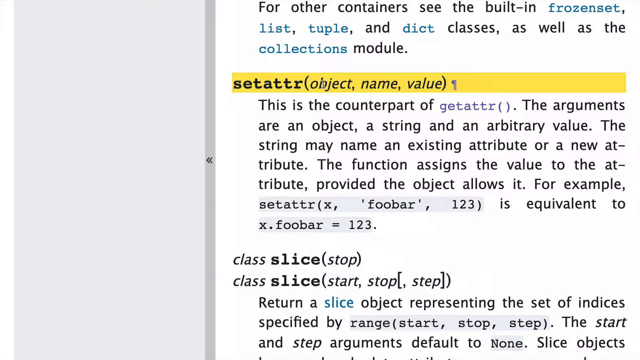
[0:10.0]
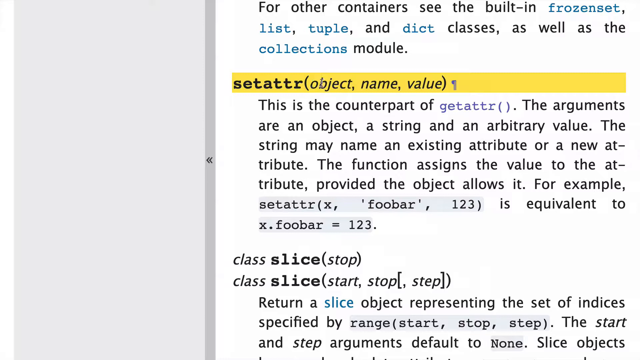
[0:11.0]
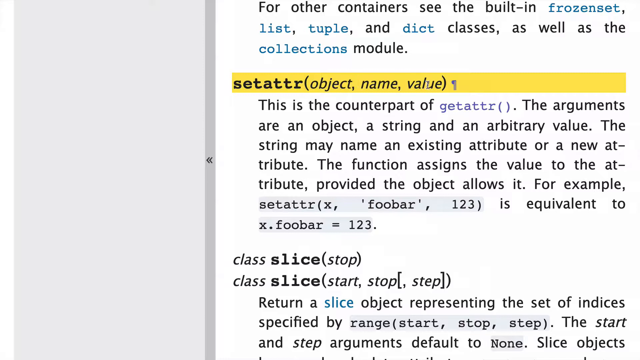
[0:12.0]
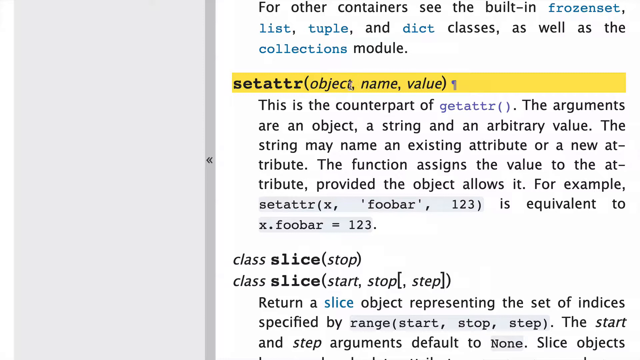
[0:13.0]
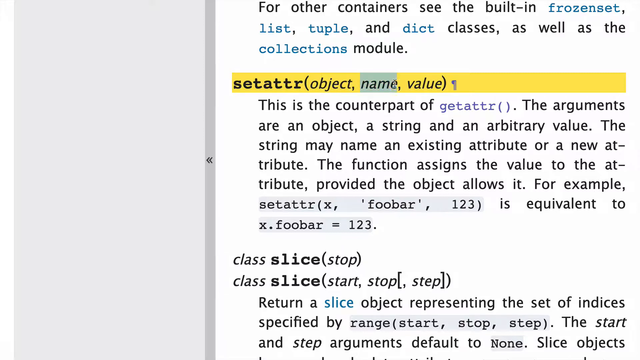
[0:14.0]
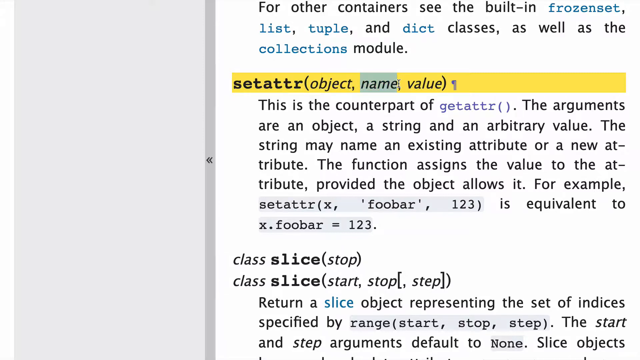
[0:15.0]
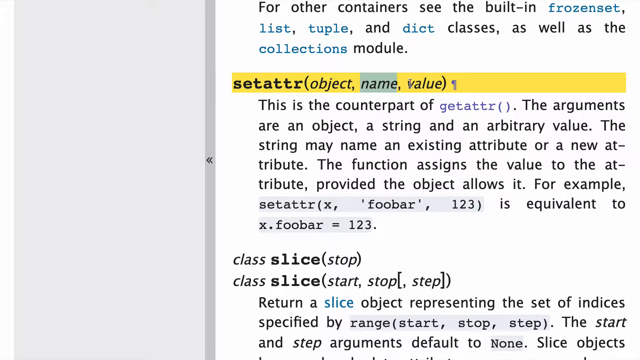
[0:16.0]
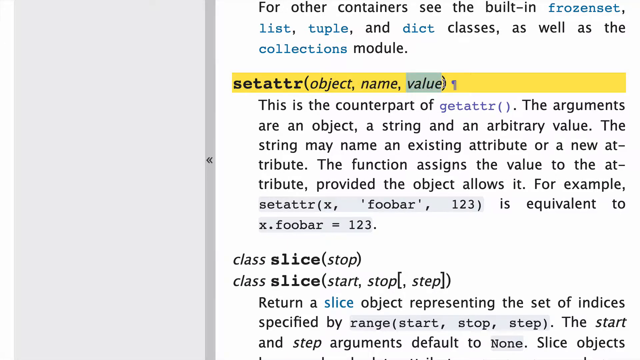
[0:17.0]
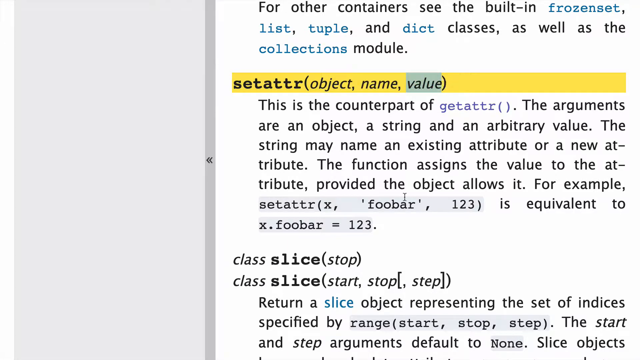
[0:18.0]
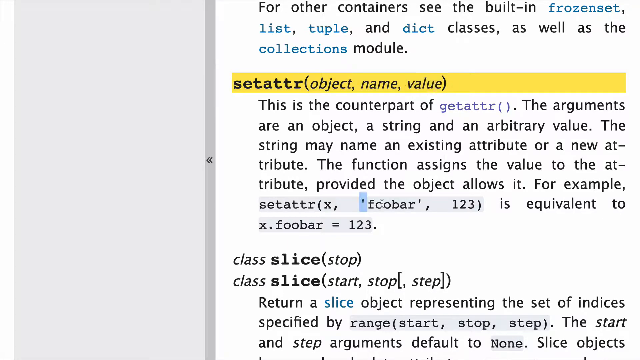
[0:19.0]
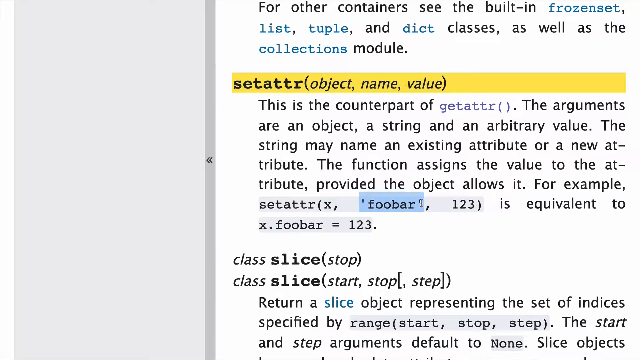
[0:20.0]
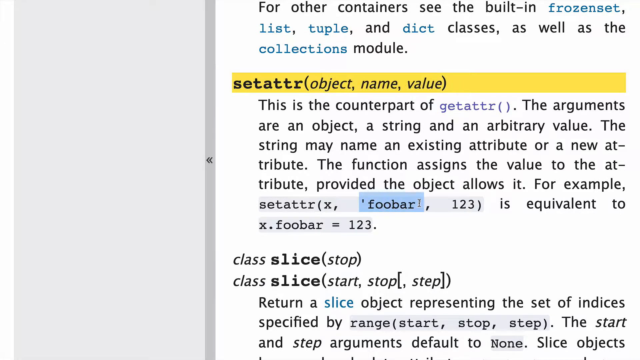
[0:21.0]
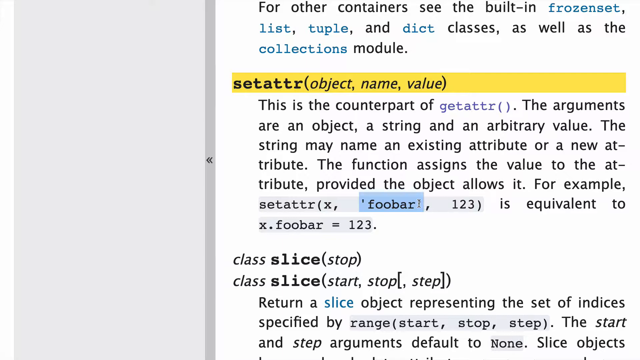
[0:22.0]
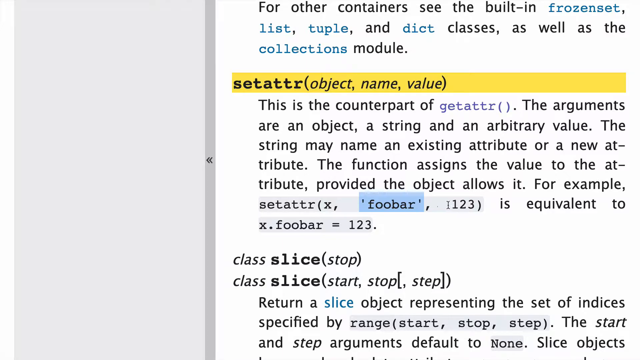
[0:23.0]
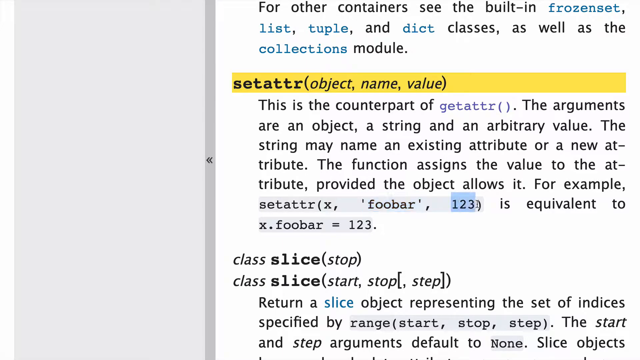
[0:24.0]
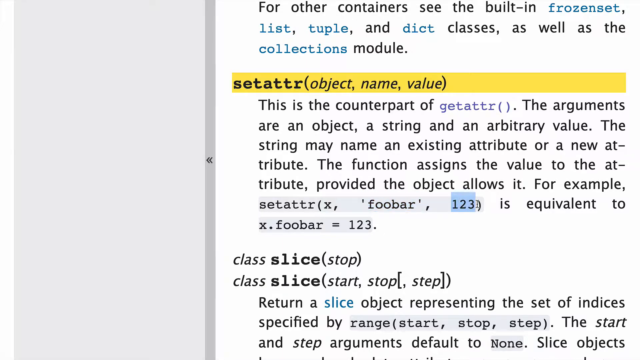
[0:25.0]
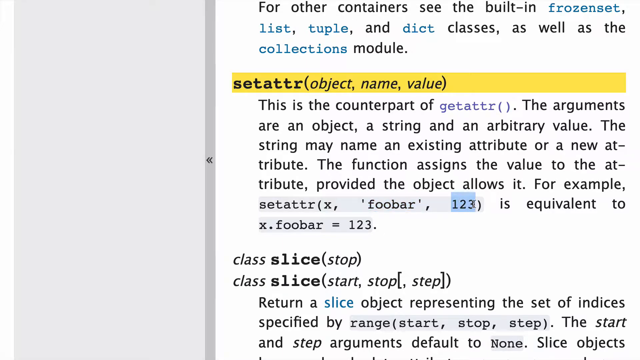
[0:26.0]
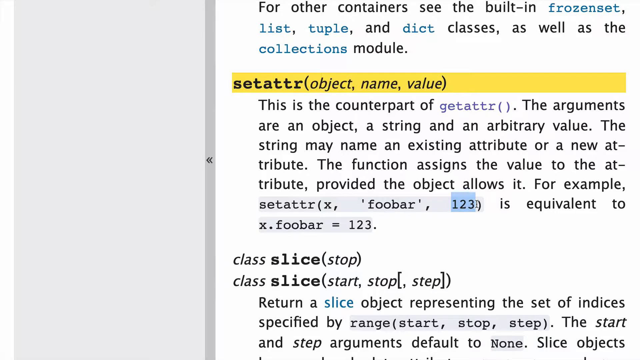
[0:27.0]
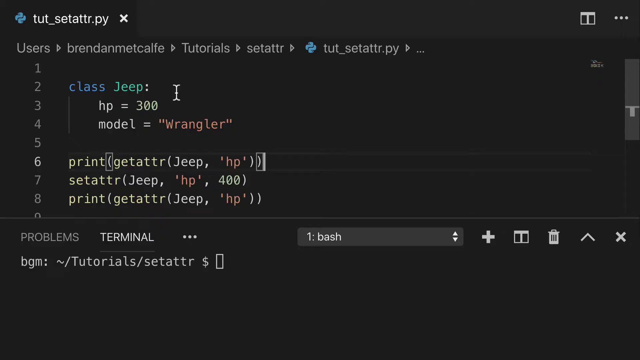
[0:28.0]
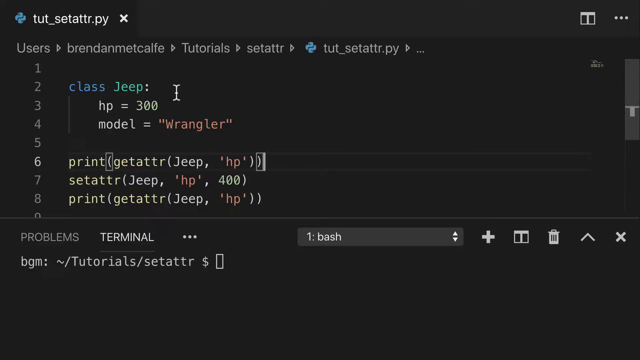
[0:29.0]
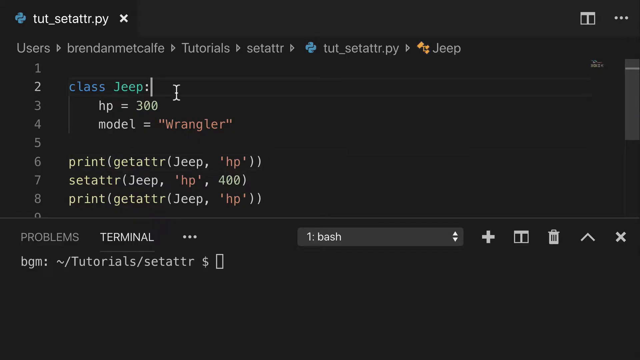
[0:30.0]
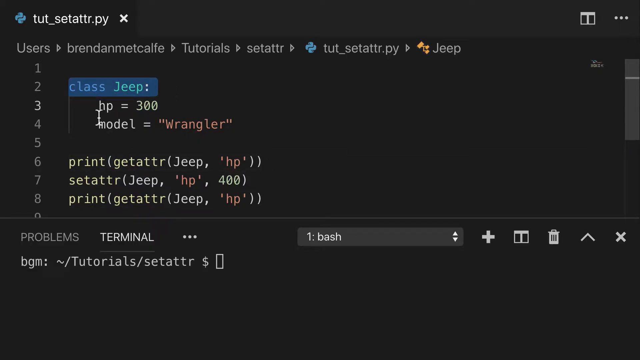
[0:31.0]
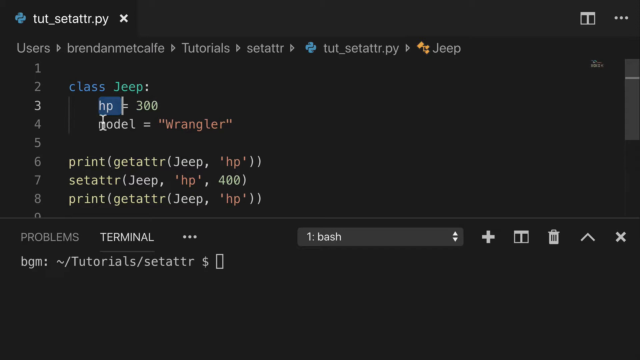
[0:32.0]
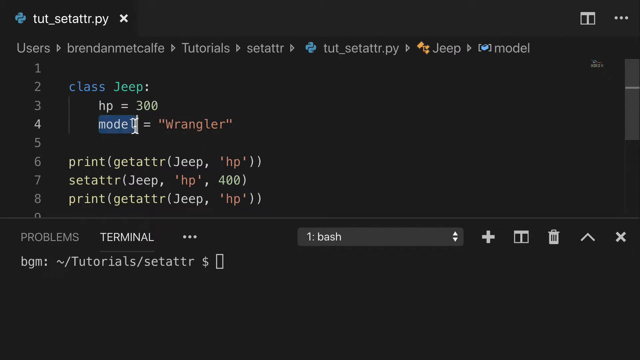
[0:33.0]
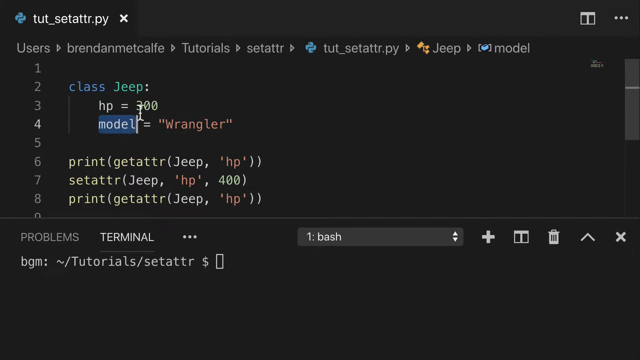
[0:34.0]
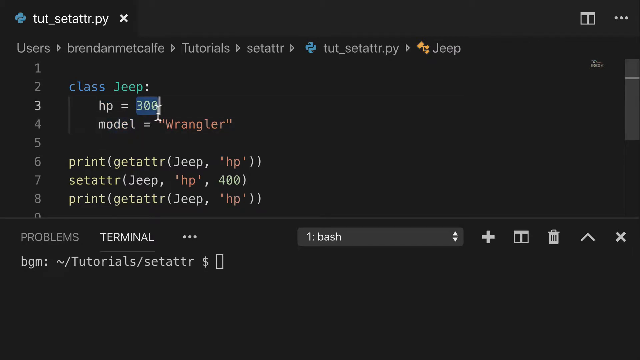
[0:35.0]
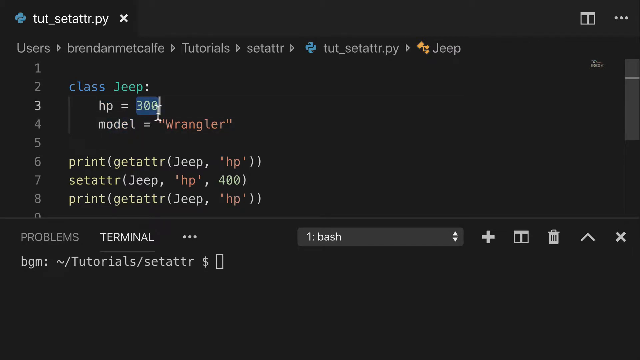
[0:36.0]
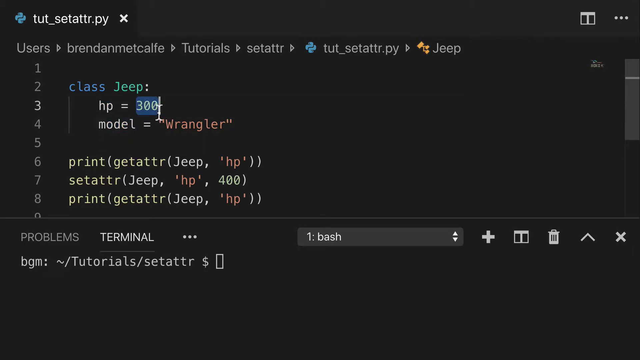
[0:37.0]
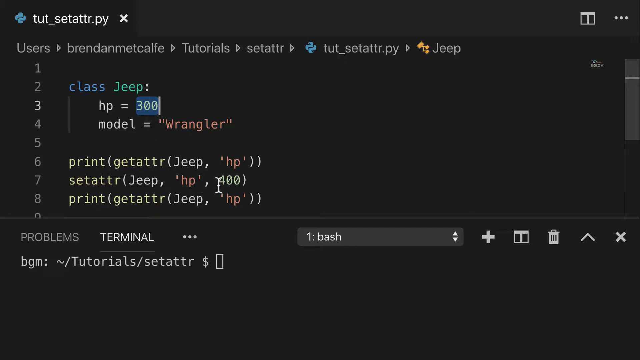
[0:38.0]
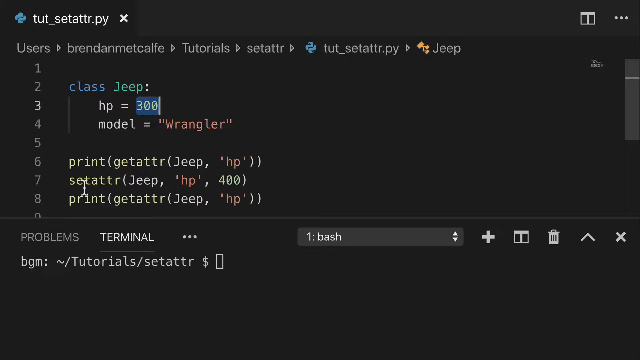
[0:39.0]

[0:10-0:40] On a white screen, text reads: "For other containers, see the built-in frozen set, list, tuple, and diet classes, as well as the collection module." "Frozen set," "list," "tuple," "diet" and "collections" are in blue, and everything else is in black. It then reads "setattr, object, name, value. This is the counterpart of the getattr. The arguments are an object, a string, and an arbitrary value. The string may name an existing attribute or a new attribute. The function assigns the value to the attribute, provided the object allows it. For example, setattr x foobar 1, 2, 3 is equivalent to x.foobar equals 1, 2, 3." Further text begins "class, slice, stop" and includes "return a slice object representing the set." The word "foobar" near the top is highlighted, then "1, 2, 3" is highlighted. The view then changes to a black screen with typed white lettering reading "class, Jeep, HP 300, model Wrangler, print, getattr, Jeep, HP, setattr, Jeep, HP 400, print, getattr, Jeep, HP," followed by "problems, terminal, BGM1, tutorial, setattr." The first part of each line is highlighted, then "300" is highlighted, and the view returns to the description of what setattr is.